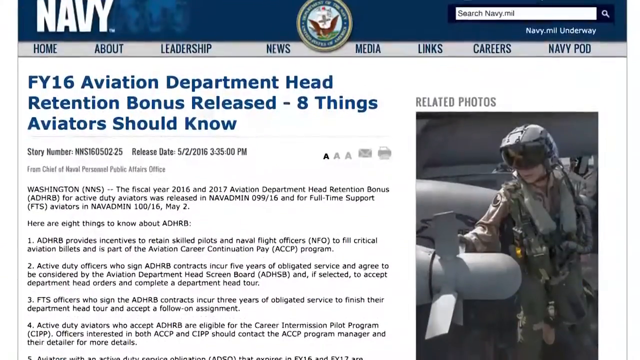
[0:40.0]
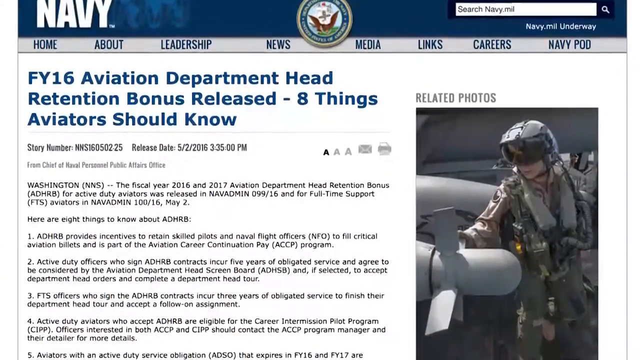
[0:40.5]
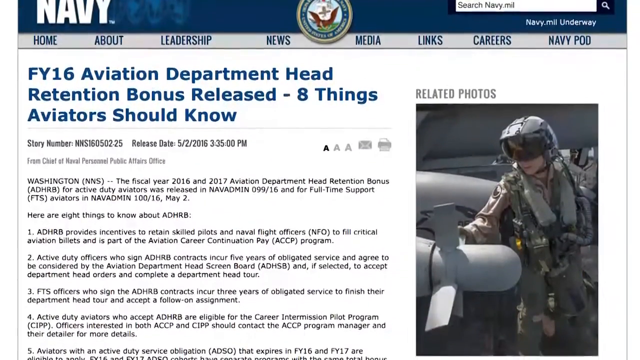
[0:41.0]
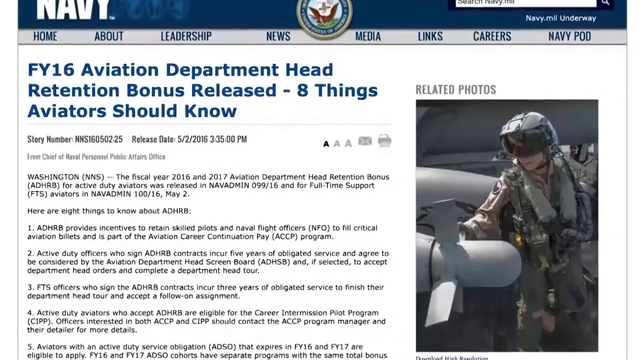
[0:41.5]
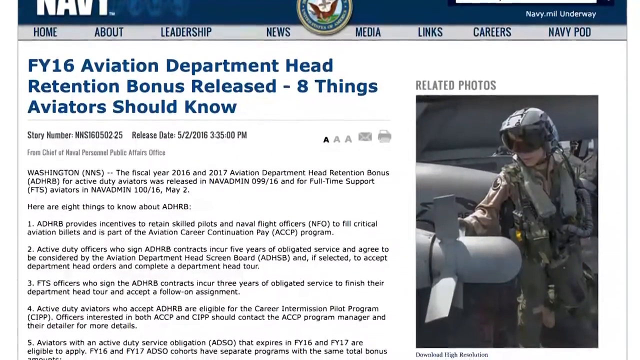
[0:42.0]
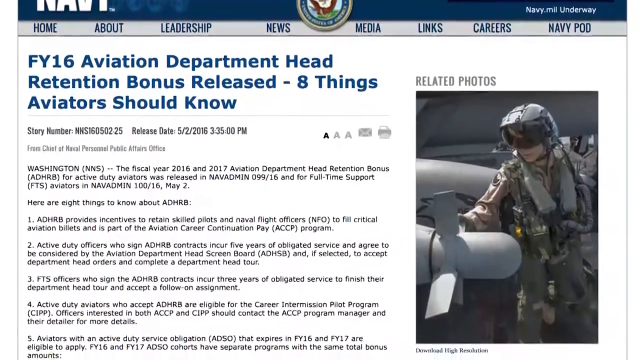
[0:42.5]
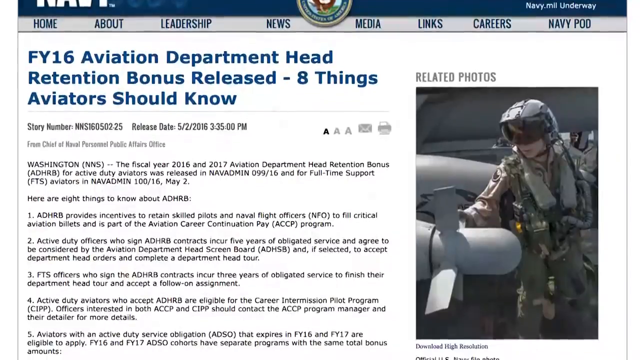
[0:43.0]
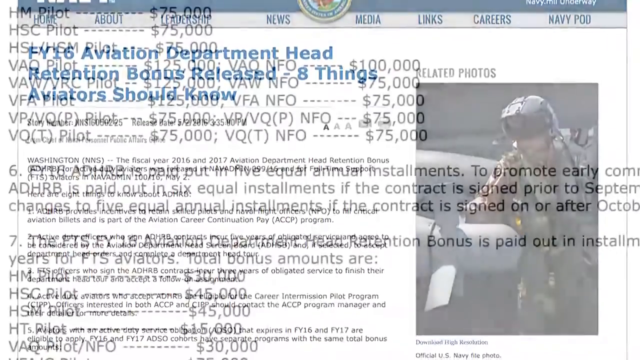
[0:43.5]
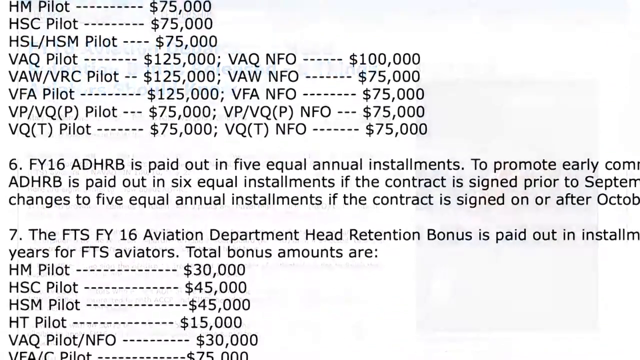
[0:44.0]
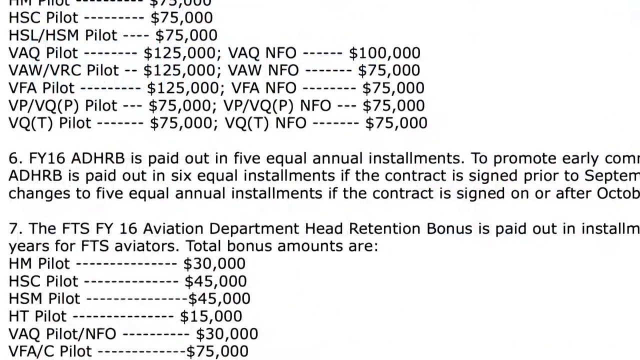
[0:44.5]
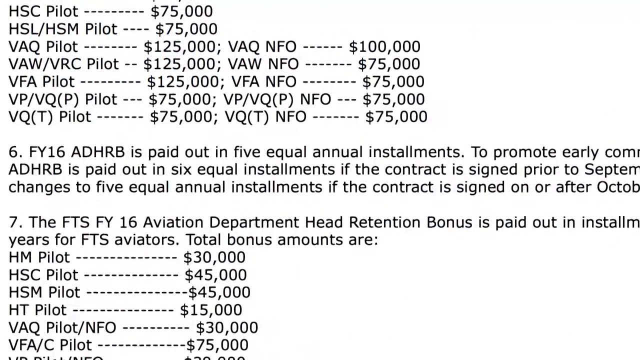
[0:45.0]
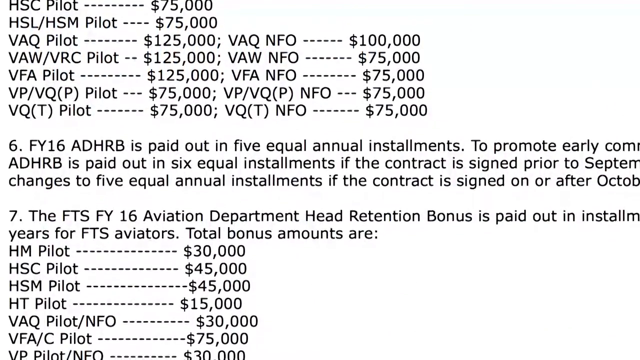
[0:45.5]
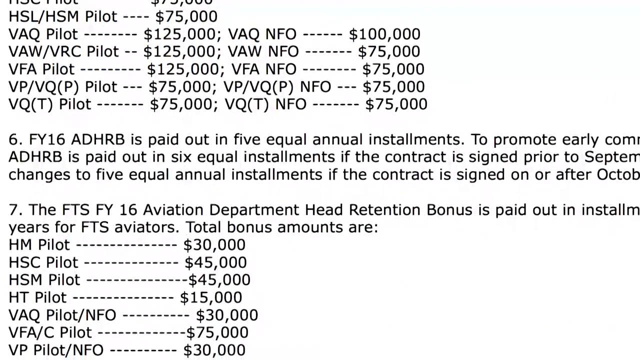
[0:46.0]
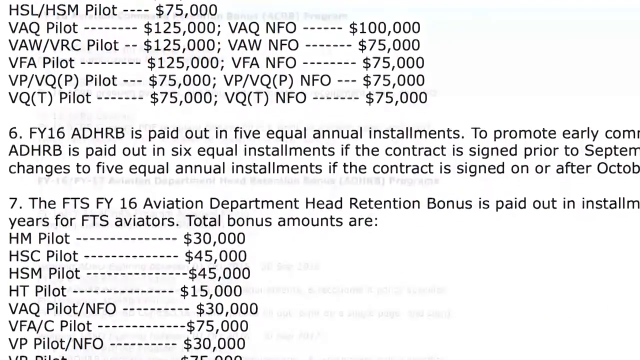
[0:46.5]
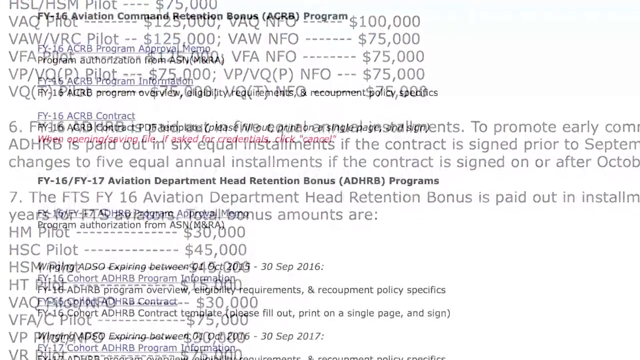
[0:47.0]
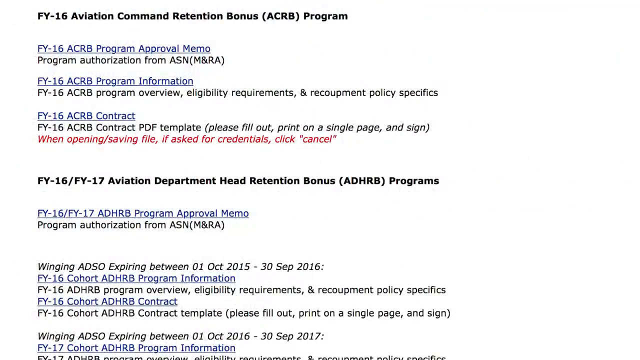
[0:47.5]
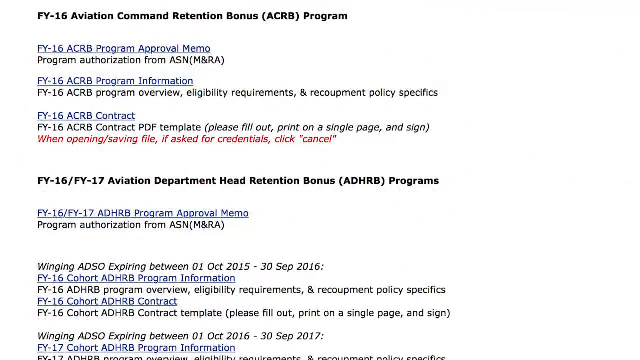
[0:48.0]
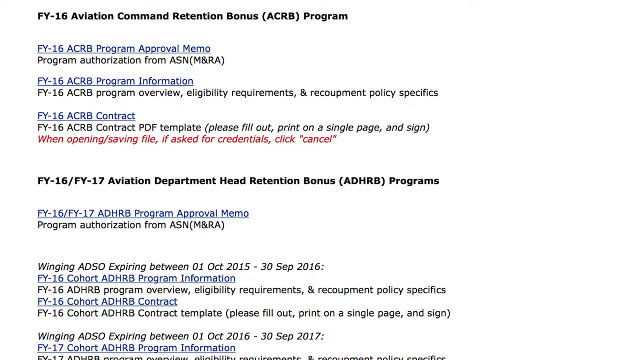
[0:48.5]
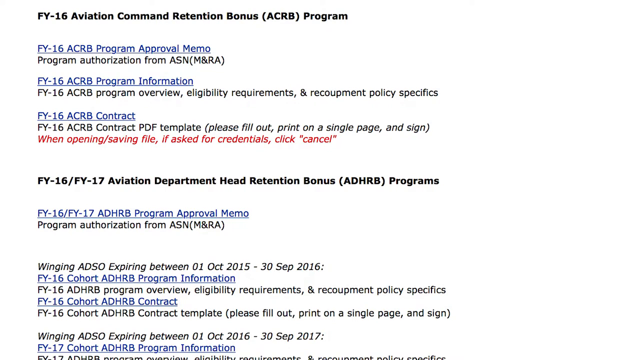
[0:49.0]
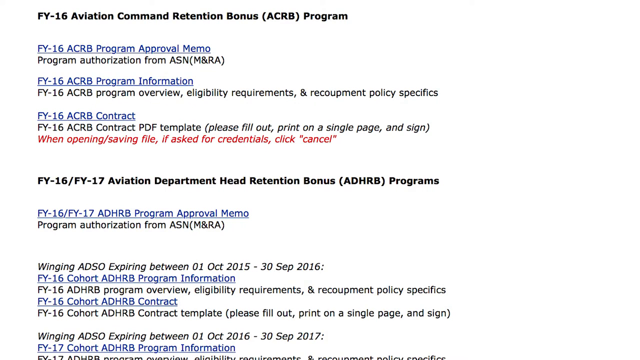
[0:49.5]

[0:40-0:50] The video appears to be promoting the website for the U.S. Navy. The background is blue at the top with a long, wide strip of blue, and a white background covers two-thirds of the rest of the page. At the top, under the word "Navy" in white, clickable categories read "Home, About, Leadership, News, Media, Links, Careers, and NavyPod," all in navy blue lettering. There is a white search bar in the top right corner and a Navy emblem in the top center with a traditional American eagle symbol in its center. The title on this page of the website reads "FY16 Aviation Department Head Retention Bonus Released-8 Things Aviators Should Know." It has a story number followed by a release date of May 2, 2016 at 3.35pm. On the right side of the screen is the text "Related Photos" and a photo of an airman, a naval officer, wearing a flying helmet and standing by aviation equipment.